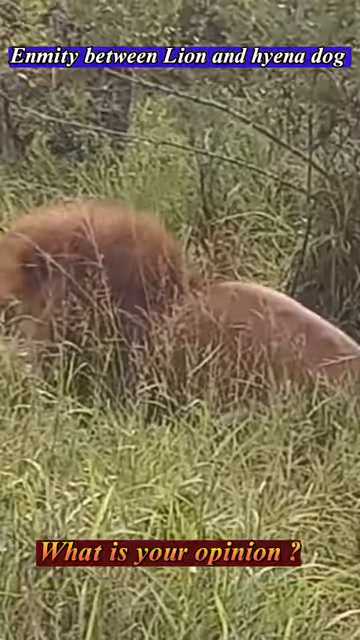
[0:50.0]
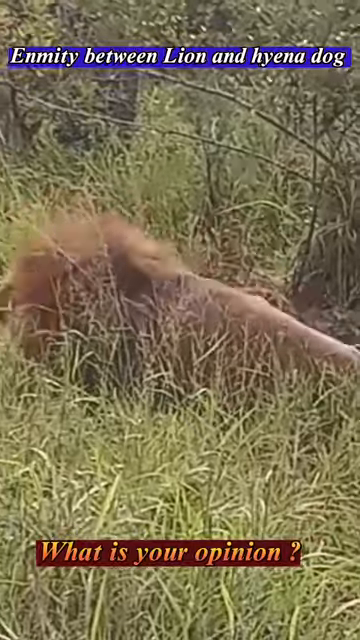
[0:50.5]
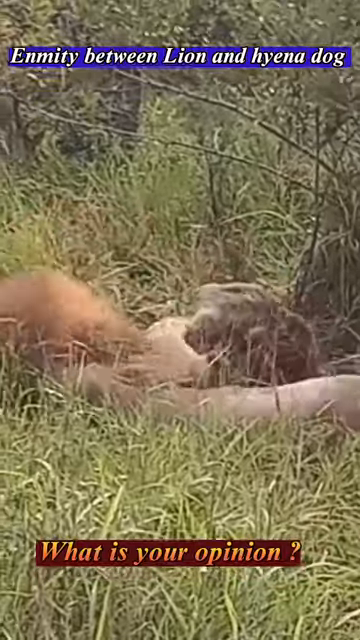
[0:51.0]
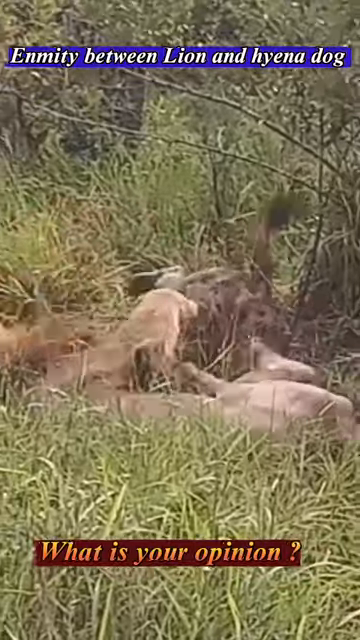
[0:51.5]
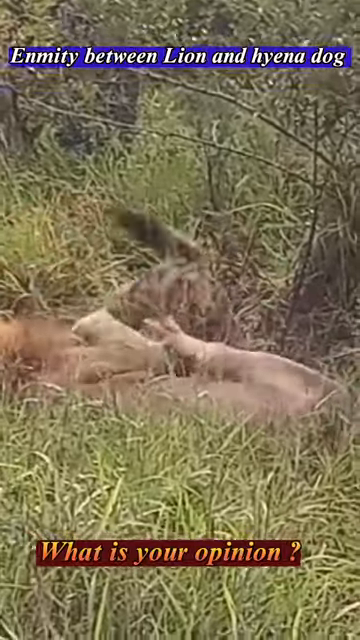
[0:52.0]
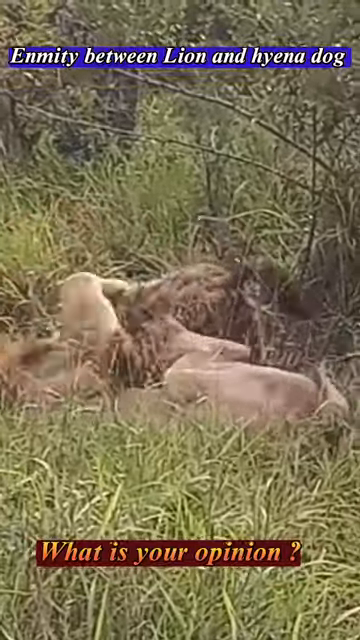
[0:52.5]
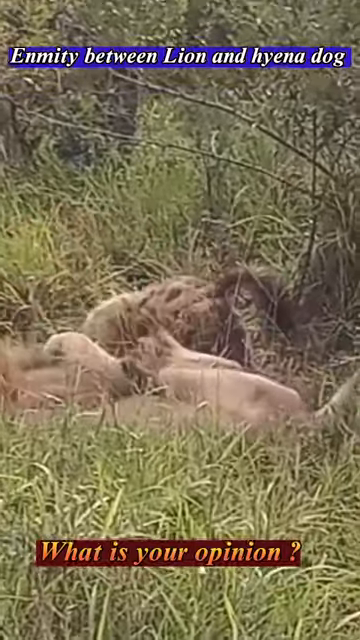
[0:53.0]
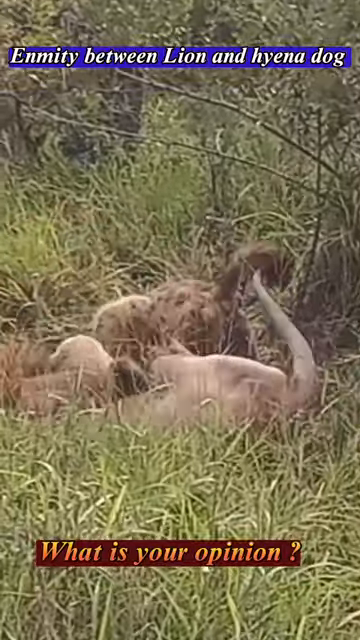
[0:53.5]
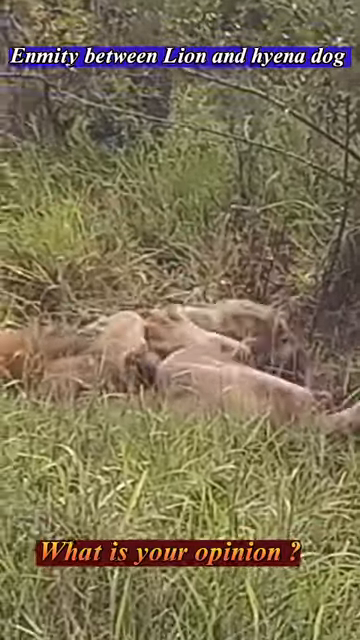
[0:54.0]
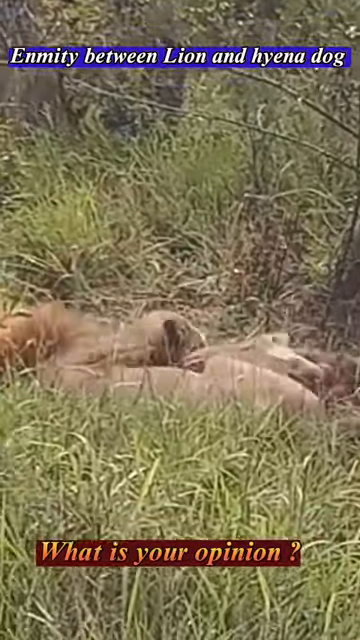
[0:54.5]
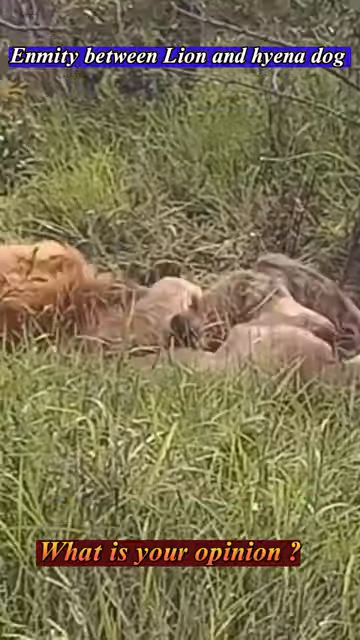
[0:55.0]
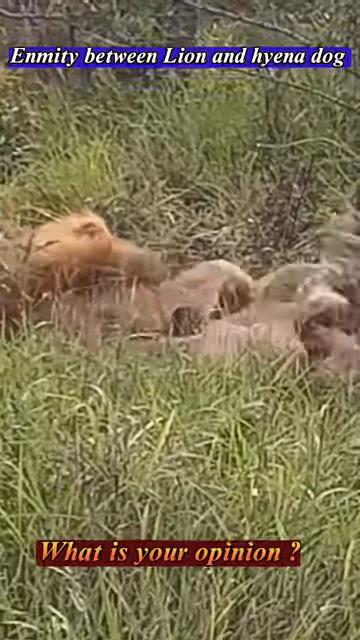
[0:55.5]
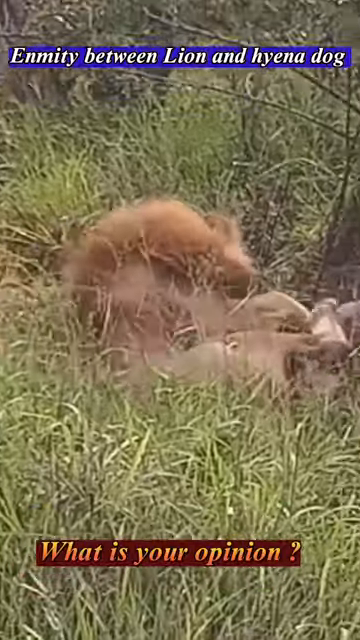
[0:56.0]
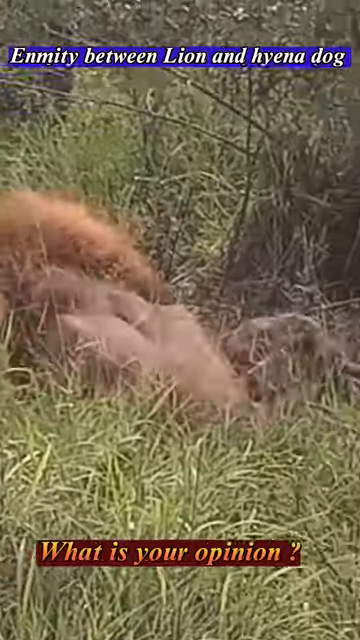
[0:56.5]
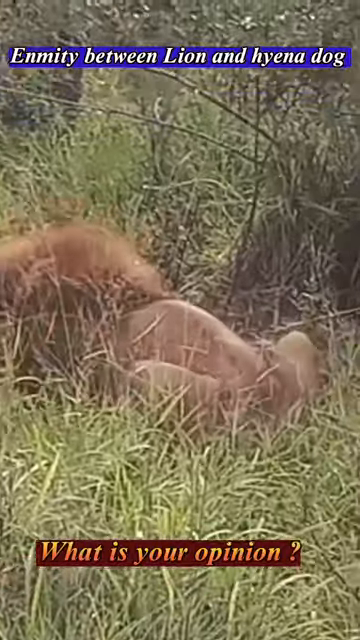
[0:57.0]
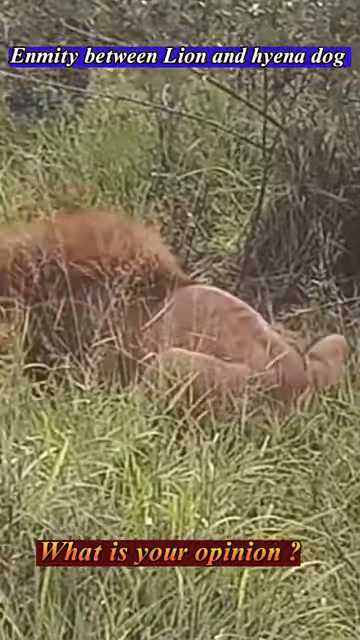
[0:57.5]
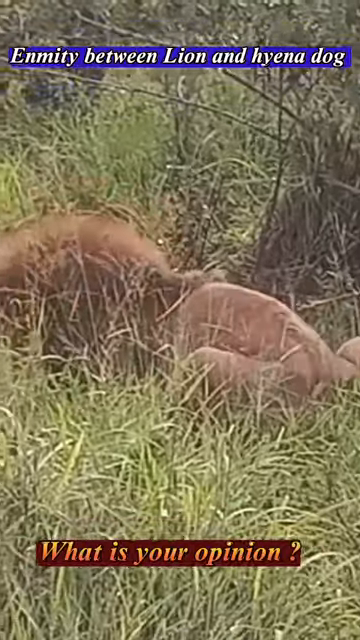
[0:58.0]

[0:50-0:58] The attack appears to be between a hyena and a lion rather than two lions, though the video is poor quality and hard to make out. The lion and the hyena fight in a struggle that happens very fast. The lion seems to be winning, ending up on top of the hyena. It is a male lion, with a large, furry mane around its head. While struggling, the hyena looks to be kicking the lion with its back legs, trying to get away or attack it.